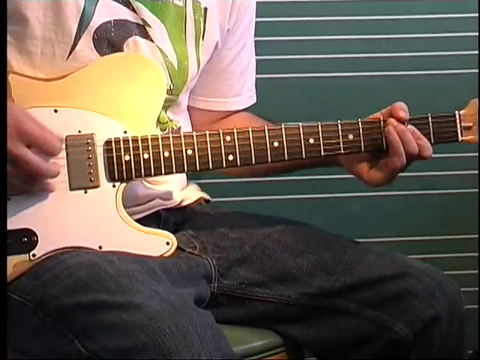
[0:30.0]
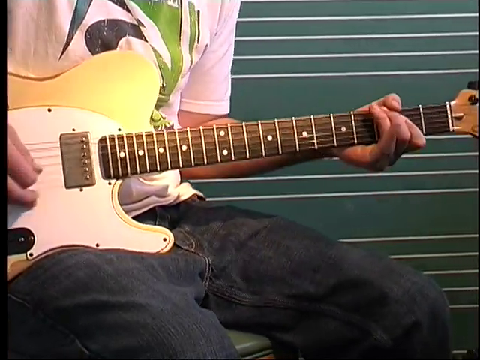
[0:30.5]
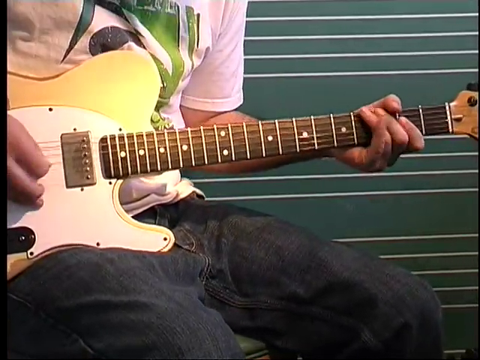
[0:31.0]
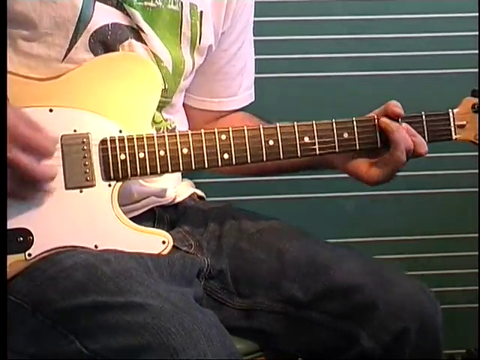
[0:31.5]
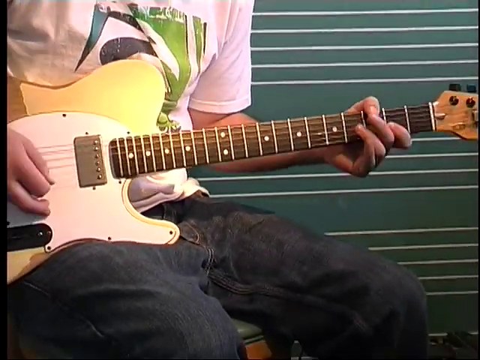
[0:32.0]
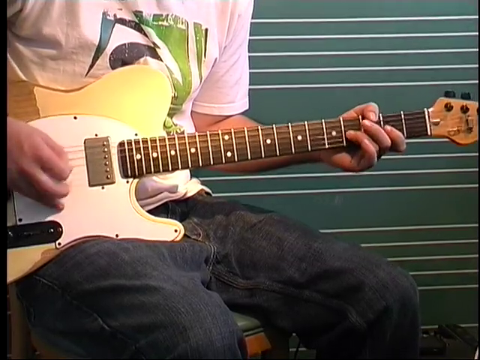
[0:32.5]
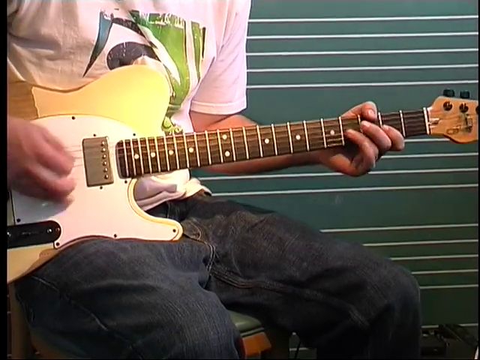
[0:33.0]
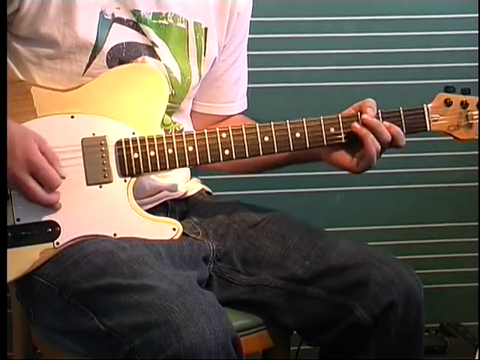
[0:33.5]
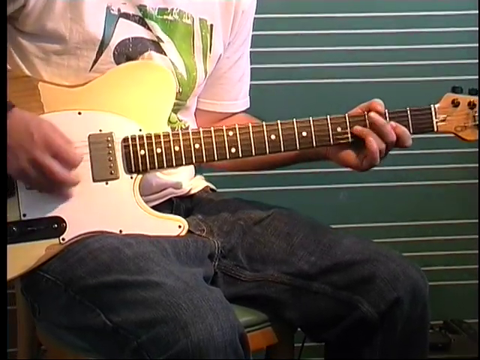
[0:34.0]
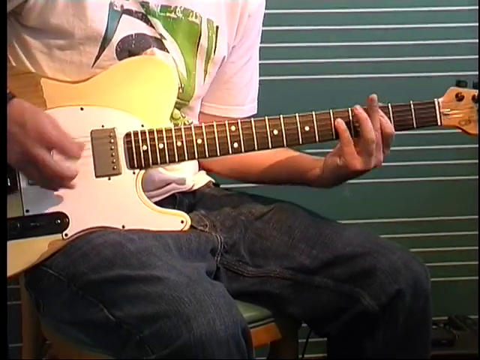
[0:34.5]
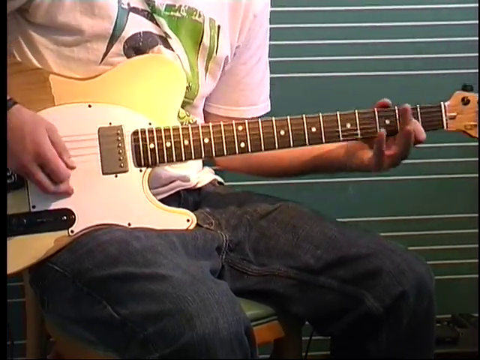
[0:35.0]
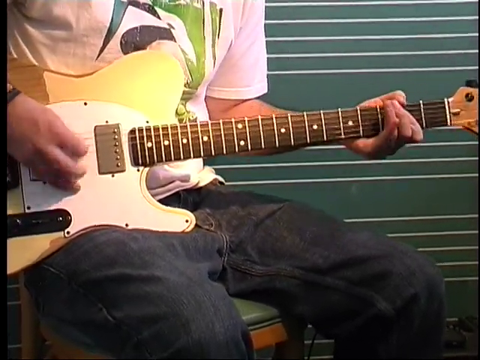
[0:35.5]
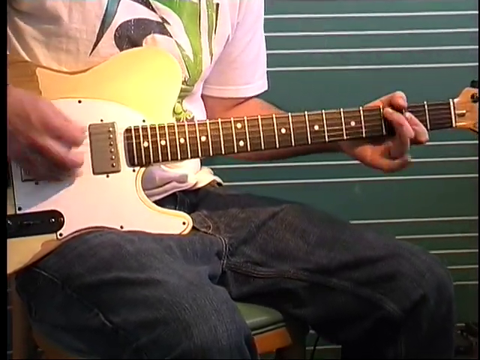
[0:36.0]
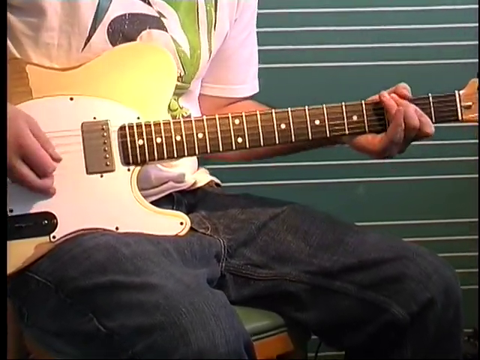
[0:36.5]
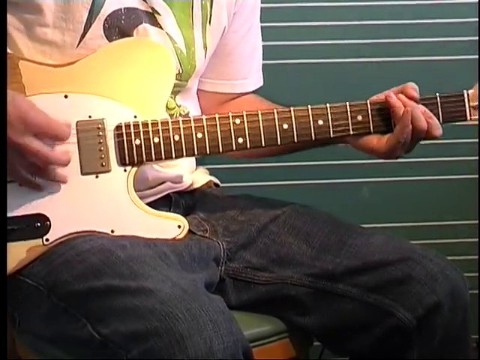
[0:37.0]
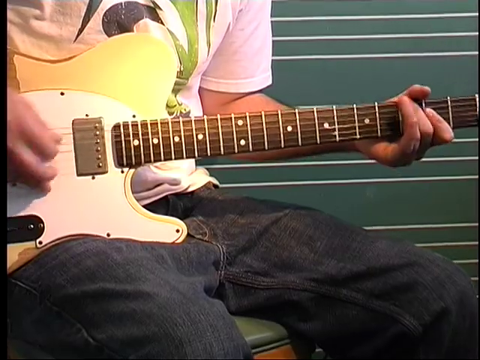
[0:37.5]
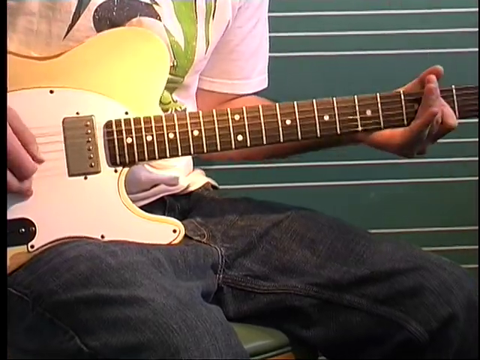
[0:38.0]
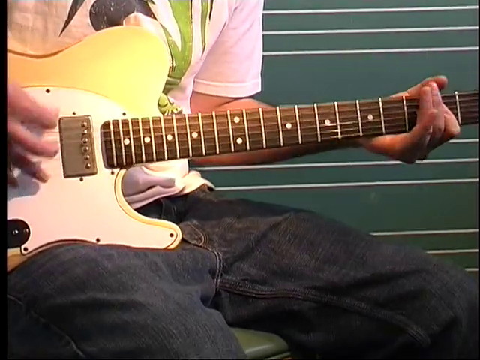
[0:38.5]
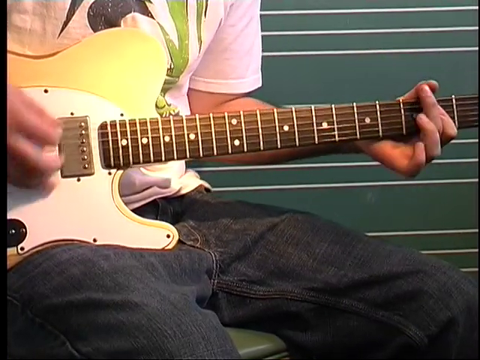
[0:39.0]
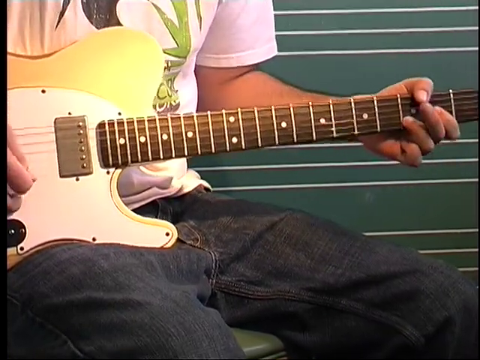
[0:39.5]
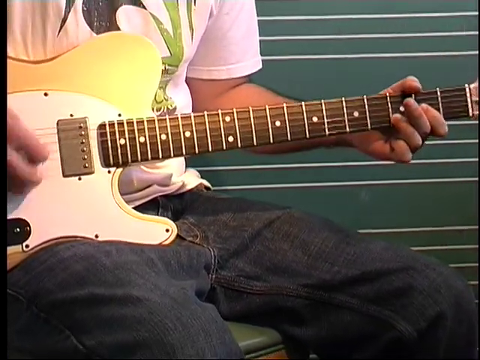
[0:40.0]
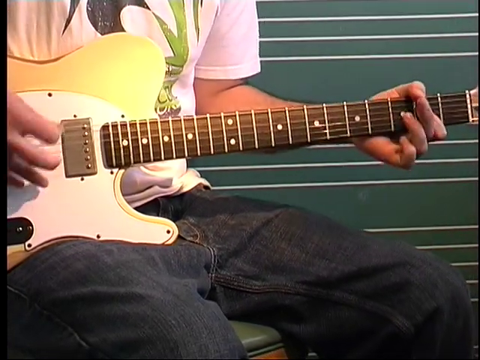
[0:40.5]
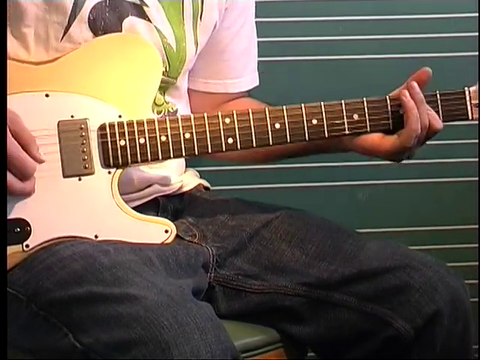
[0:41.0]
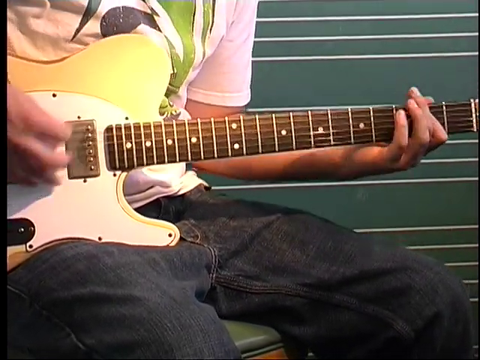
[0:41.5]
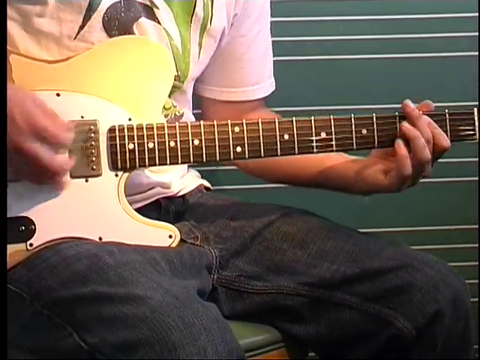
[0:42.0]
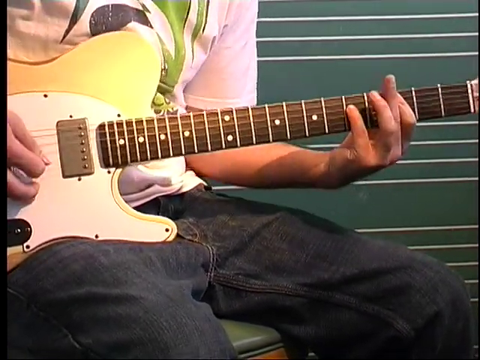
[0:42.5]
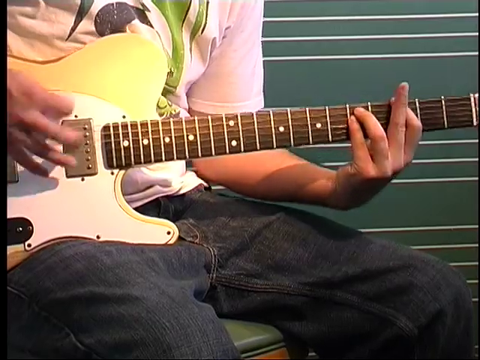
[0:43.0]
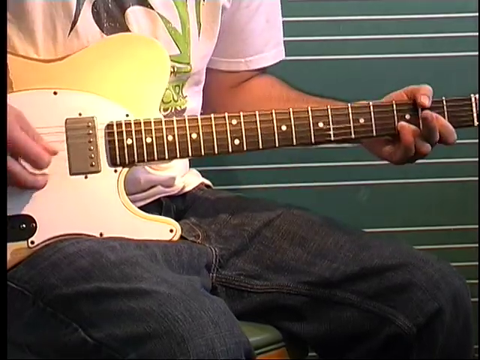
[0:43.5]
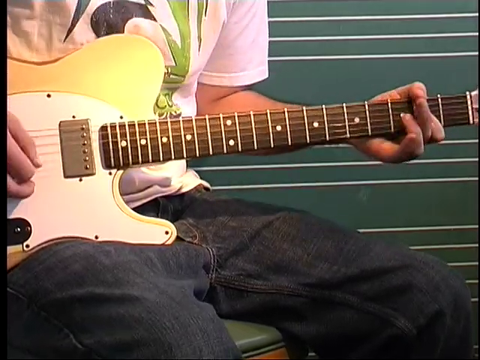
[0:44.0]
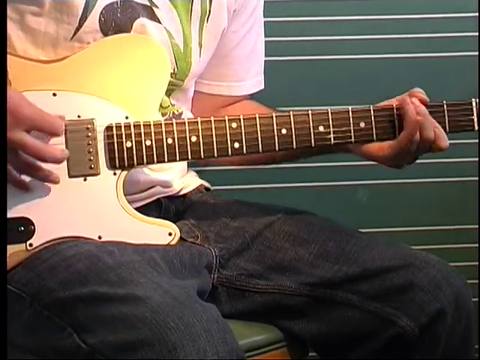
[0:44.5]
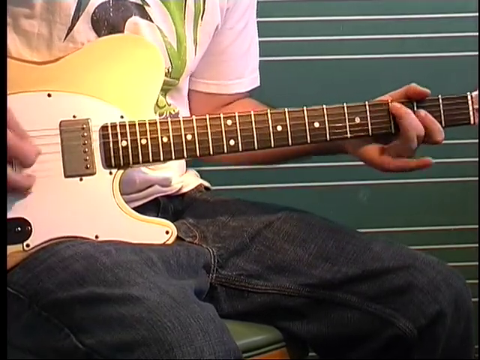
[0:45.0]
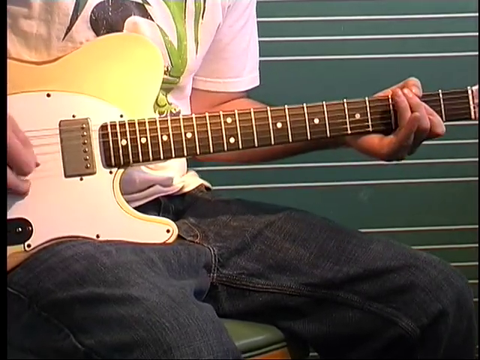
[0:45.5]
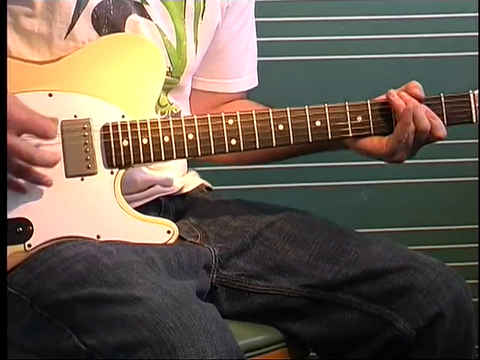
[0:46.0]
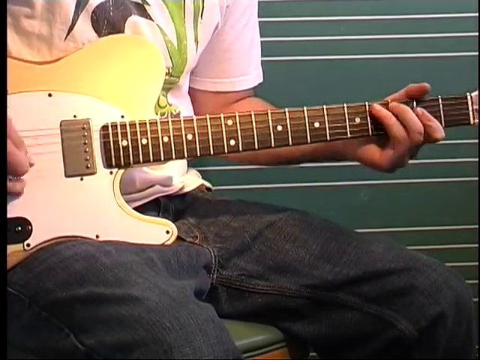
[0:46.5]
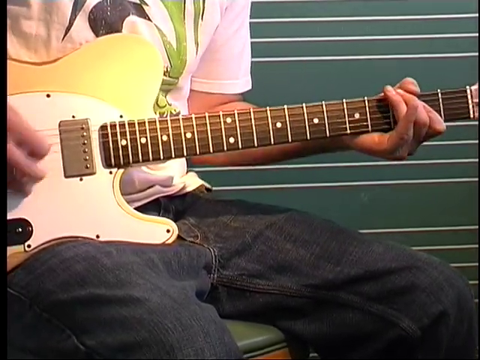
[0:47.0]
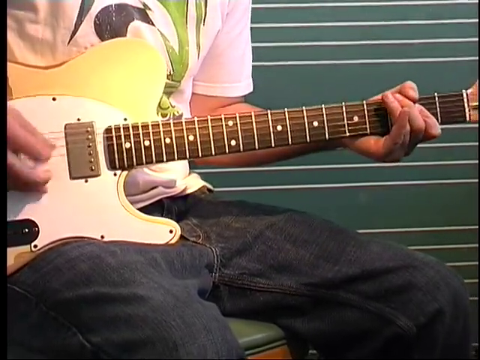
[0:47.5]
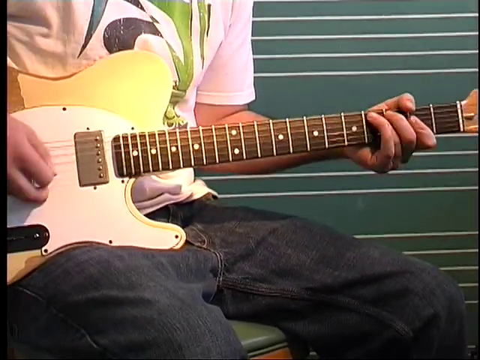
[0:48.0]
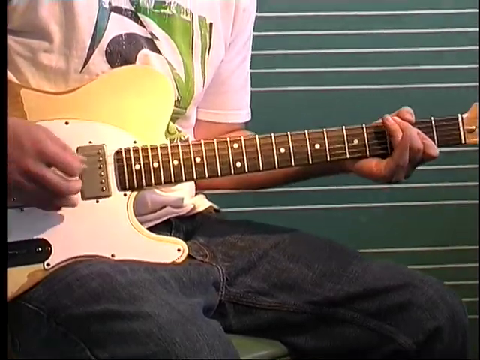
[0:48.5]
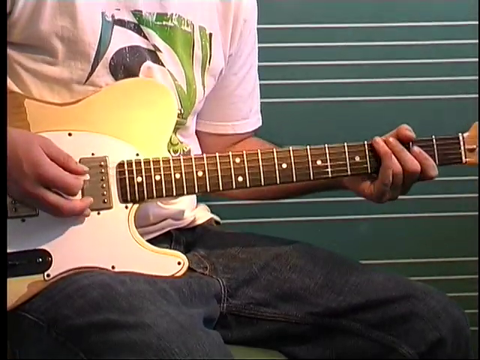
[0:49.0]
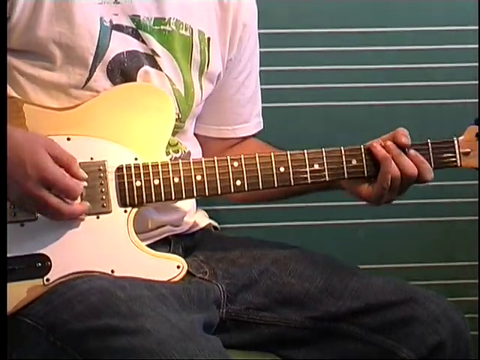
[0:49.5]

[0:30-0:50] A man plays an electric guitar. He wears a short-sleeved white shirt with a graphic on the front of green and blue wavy lines, and dark blue jeans, and holds the guitar on his lap. The guitar's body is yellow and white. The camera is somewhat zooming in on the guitar. His right hand strums with a pick while his left hand, at the end of the neck, presses different notes. Behind him is what looks like a green chalkboard with groups of five white lines across it, like those on sheet music. The man continues playing, his right hand strumming up and down and his left hand making complicated movements across the strings.